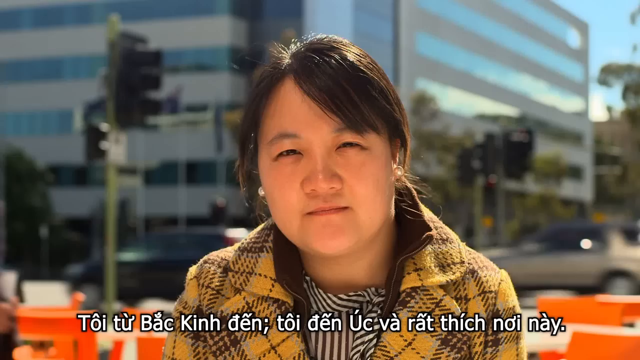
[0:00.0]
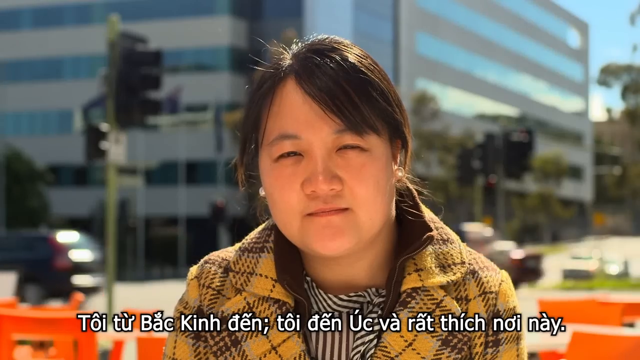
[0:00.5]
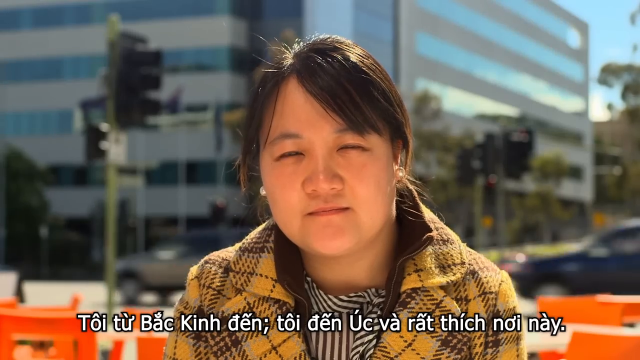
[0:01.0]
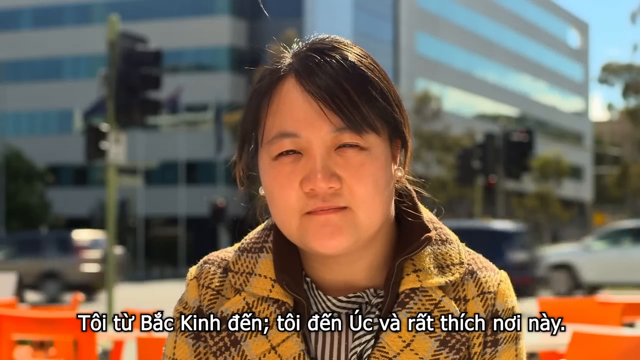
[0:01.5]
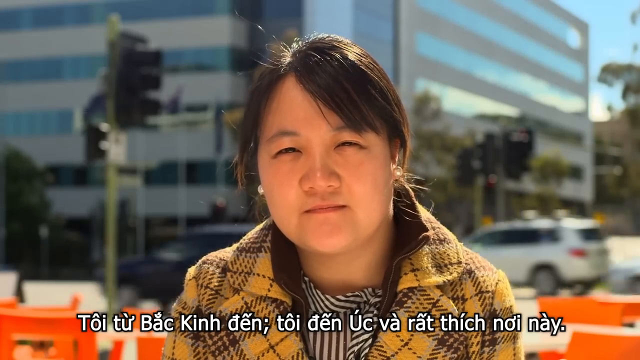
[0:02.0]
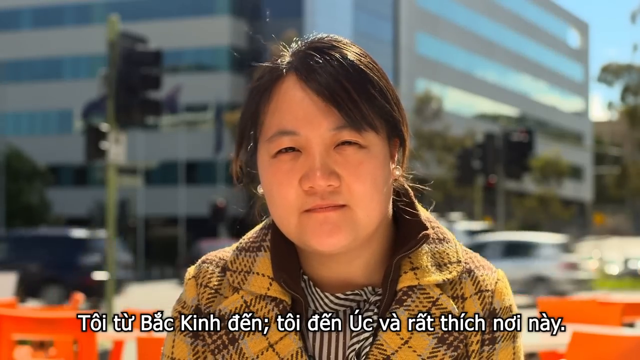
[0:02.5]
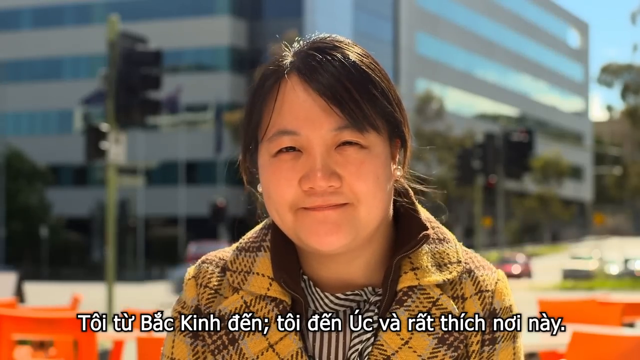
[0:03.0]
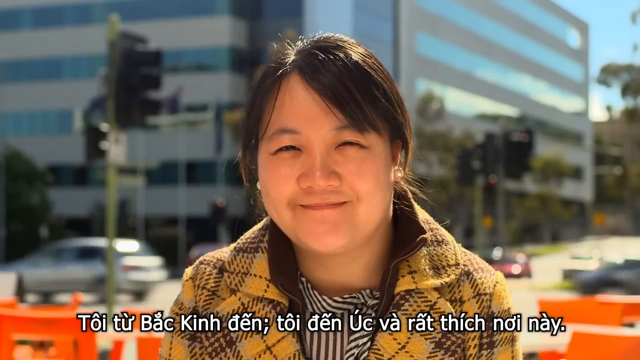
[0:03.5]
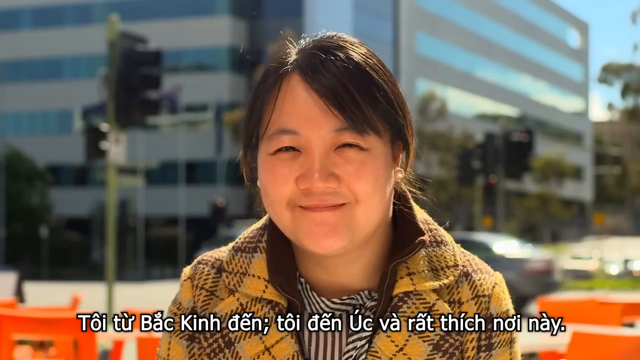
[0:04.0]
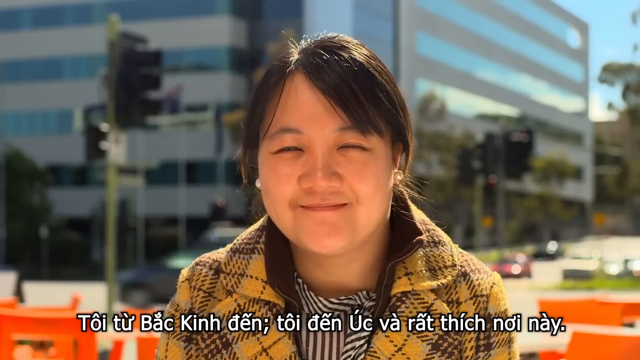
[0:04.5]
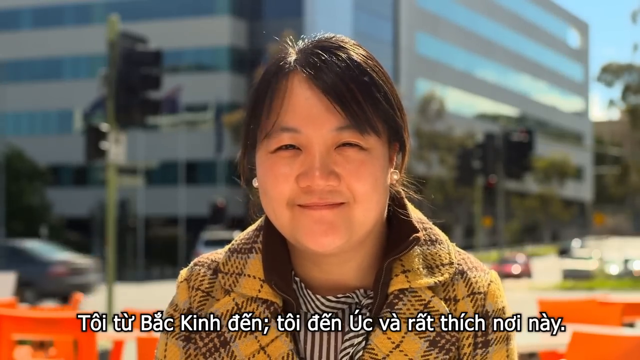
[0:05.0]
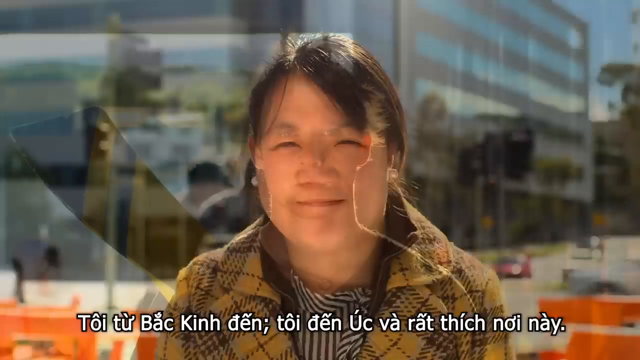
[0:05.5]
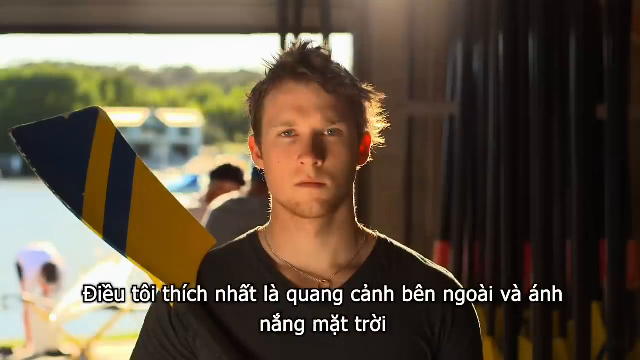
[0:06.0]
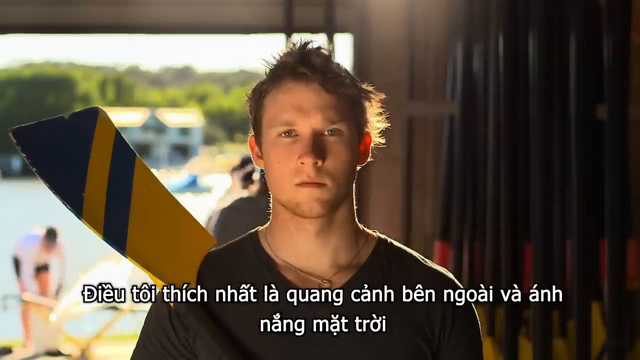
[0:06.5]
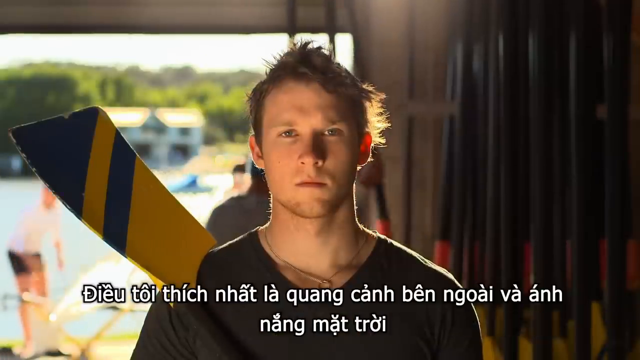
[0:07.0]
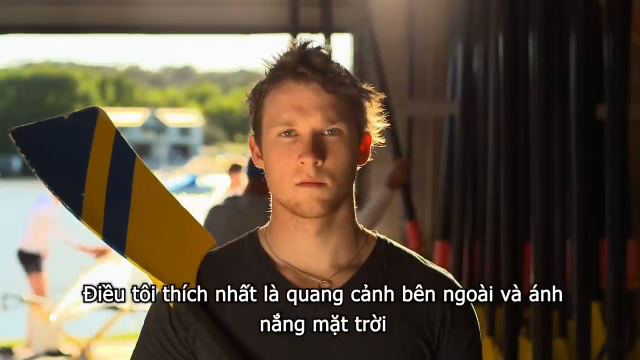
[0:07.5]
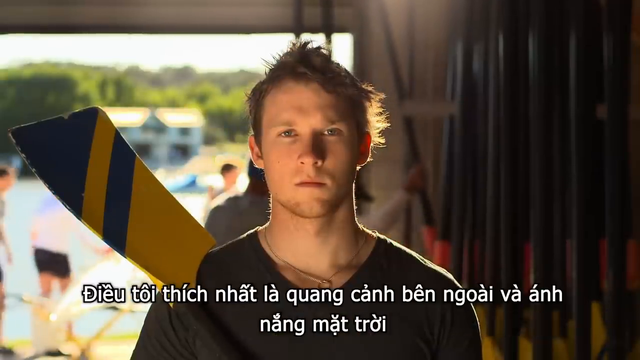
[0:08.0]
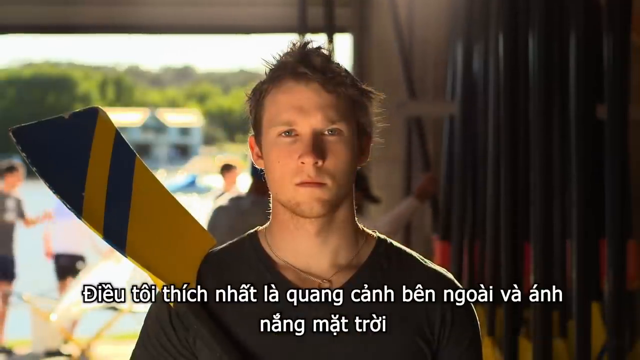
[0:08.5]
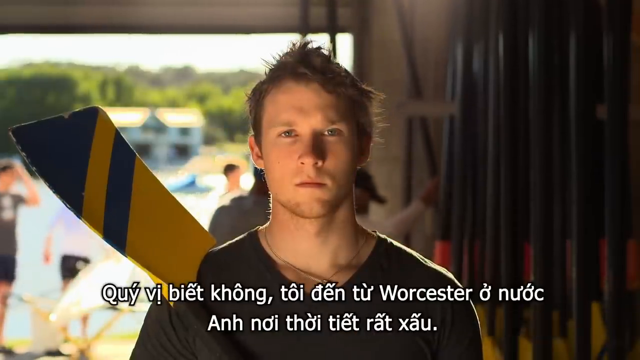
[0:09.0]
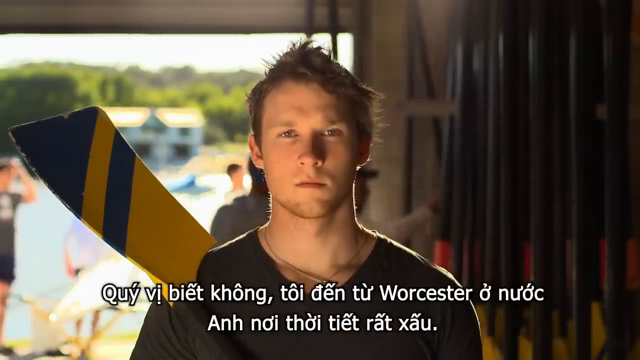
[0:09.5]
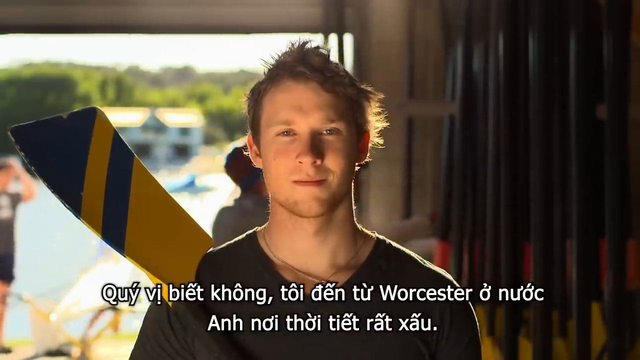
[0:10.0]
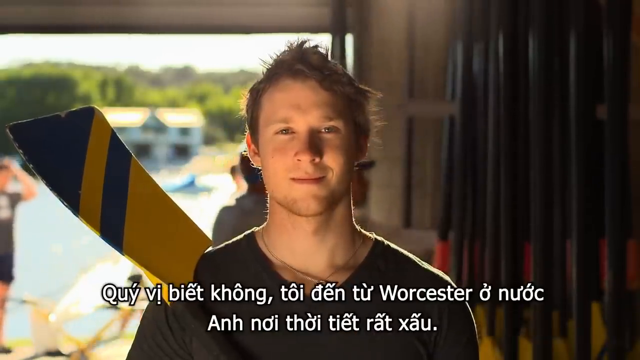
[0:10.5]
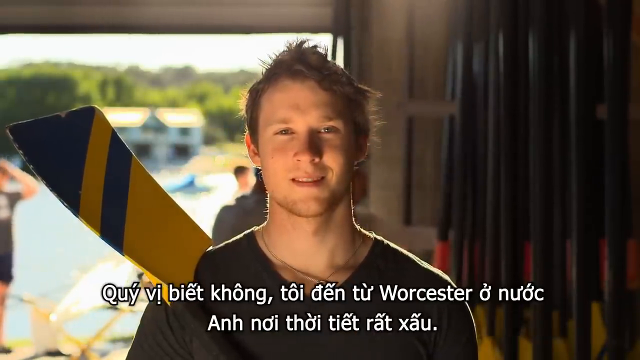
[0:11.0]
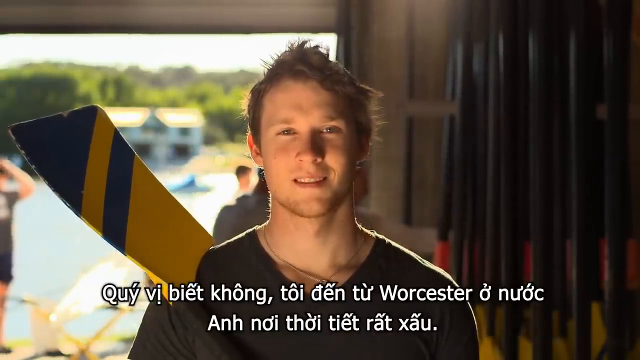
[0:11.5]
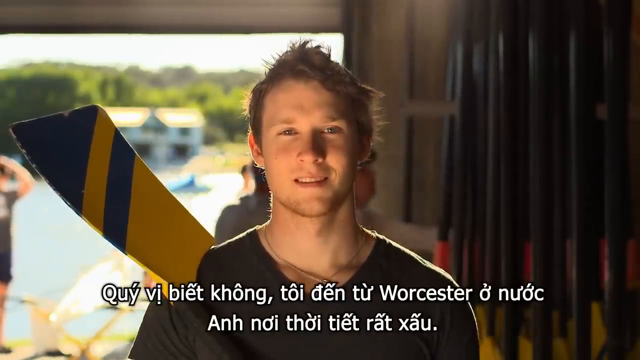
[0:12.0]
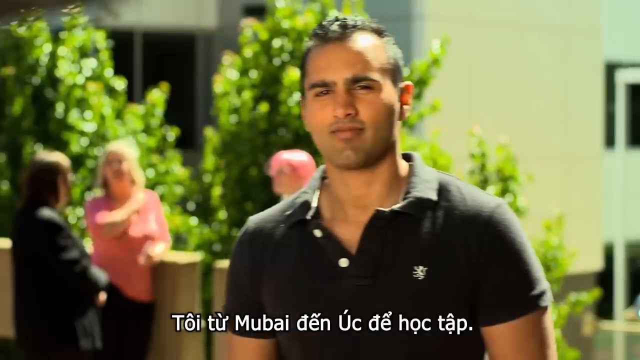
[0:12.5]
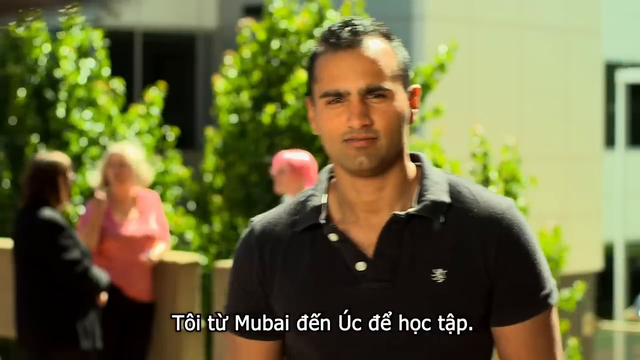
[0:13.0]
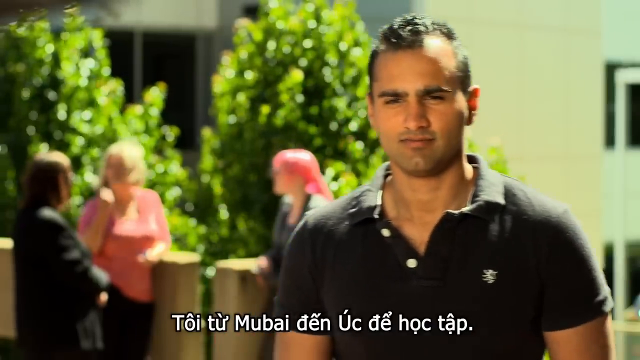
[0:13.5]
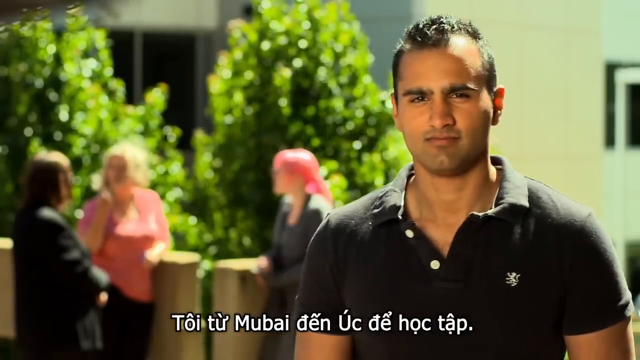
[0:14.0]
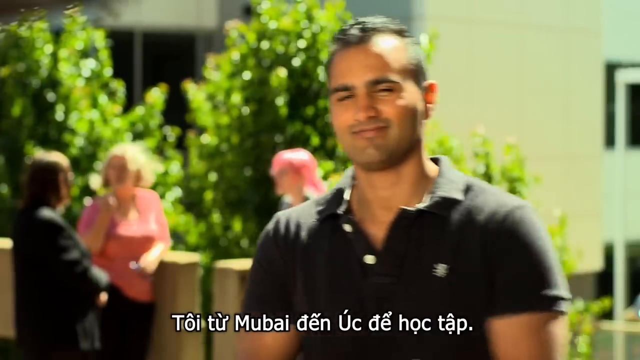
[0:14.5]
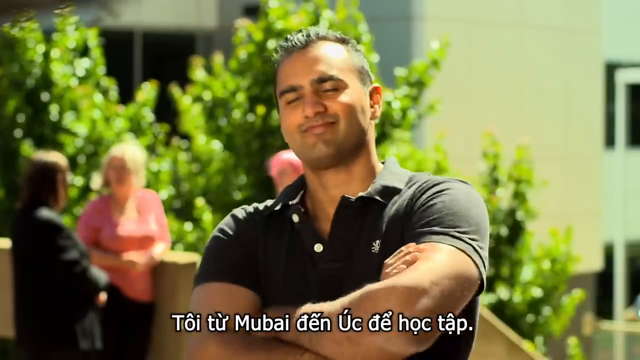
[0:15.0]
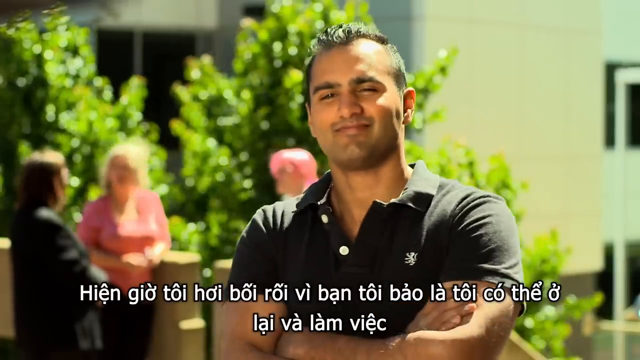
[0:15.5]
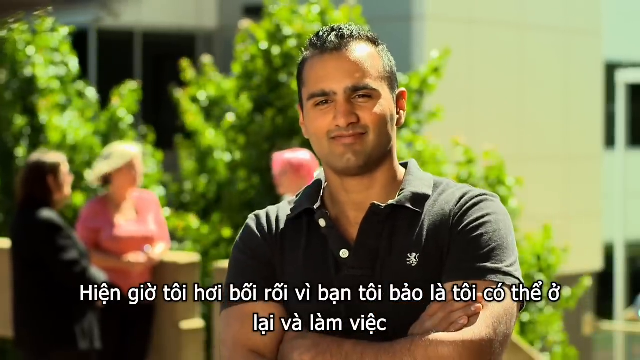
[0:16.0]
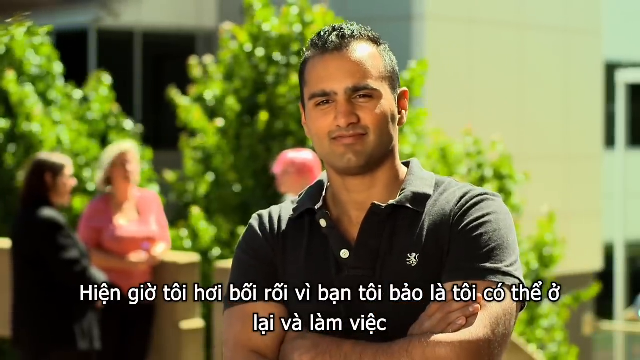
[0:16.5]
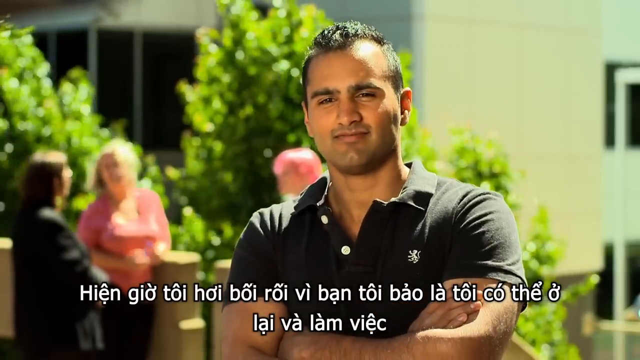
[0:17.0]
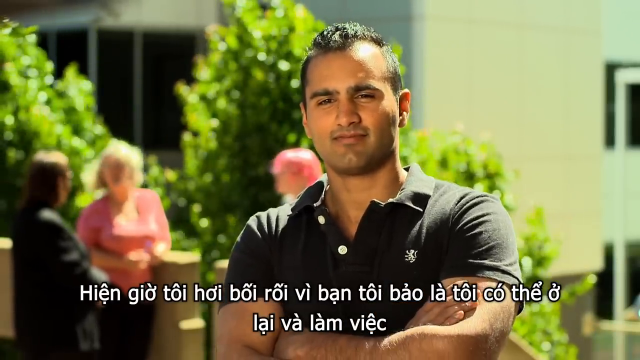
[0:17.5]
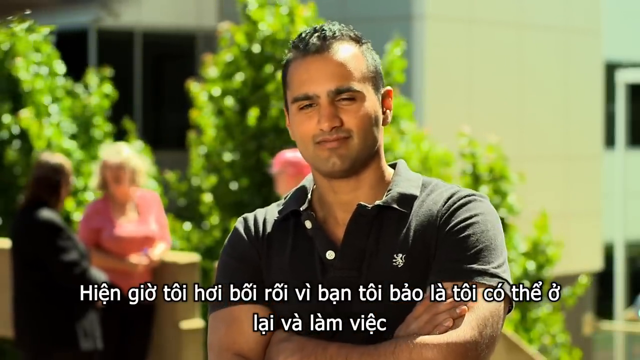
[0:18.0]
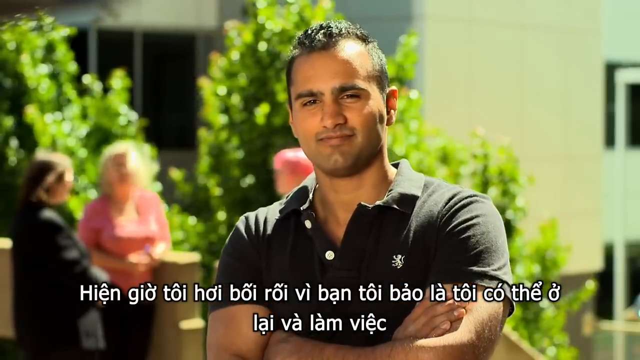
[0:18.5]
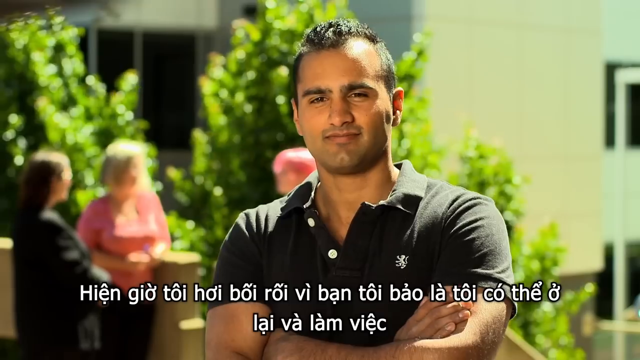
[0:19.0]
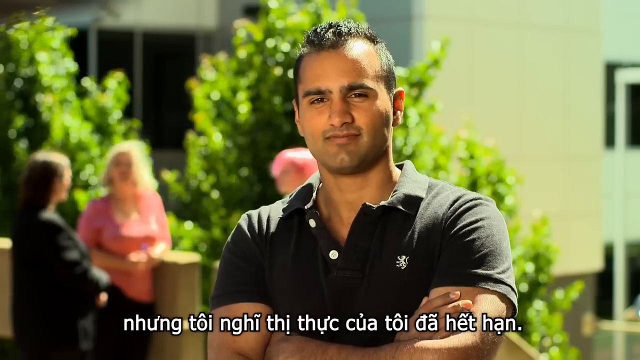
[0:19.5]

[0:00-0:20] The video opens on a close-up, with what seems to be text in some other language at the bottom. A woman wears an overcoat that looks like wool, in a yellowish squared plaid with a number of slanted lines running through it. Her hair falls over the left part of her forehead, with bangs coming down. She stands right at an intersection where cars go through, with a large corporate-looking building with rows and rows of windows and a stoplight to the left. She stands there for a minute and smiles. The video then cuts to what looks like a white man standing by what is almost a shed, open at the front, with what may be water behind him. He is bent over with his arms hanging, staring at the camera, and starts to smile. He apparently wears a black polo shirt with two buttons unclasped and some kind of white line-like insignia on his chest. His arms fall in front of him. It looks windy outside: a couple of trees sway, and a few people talk in the distance.